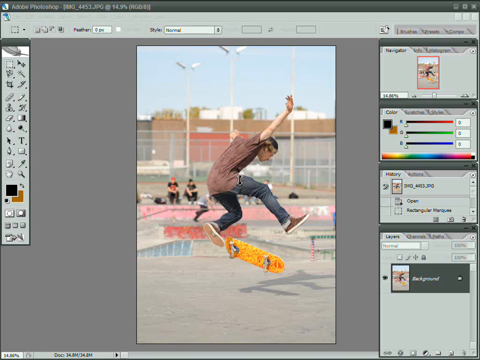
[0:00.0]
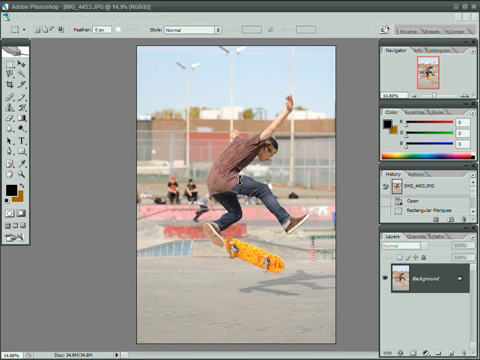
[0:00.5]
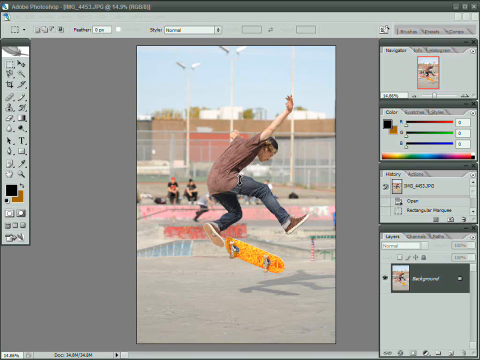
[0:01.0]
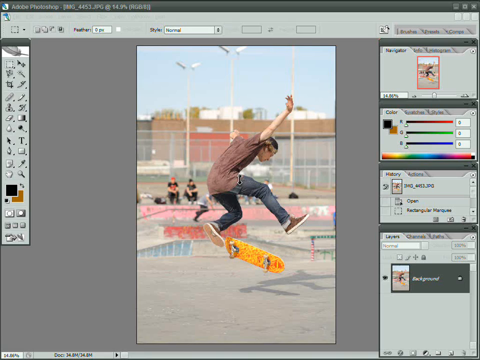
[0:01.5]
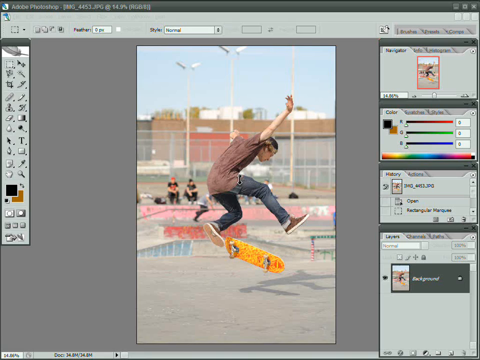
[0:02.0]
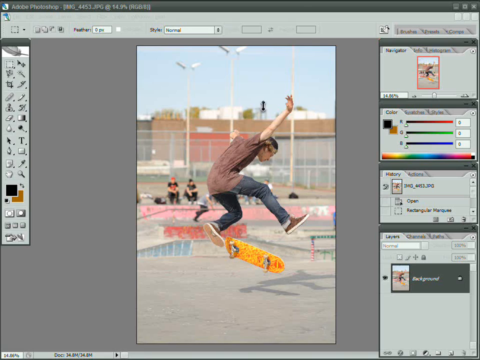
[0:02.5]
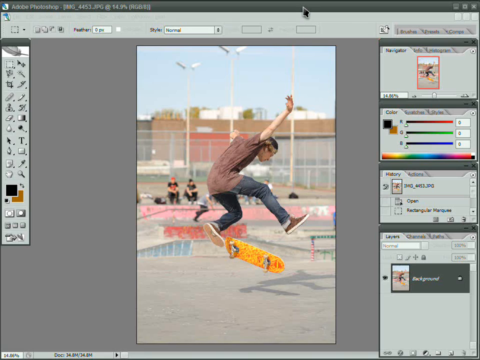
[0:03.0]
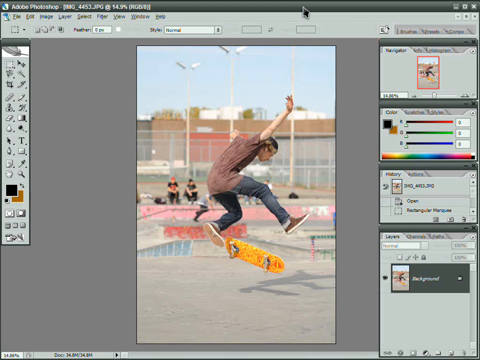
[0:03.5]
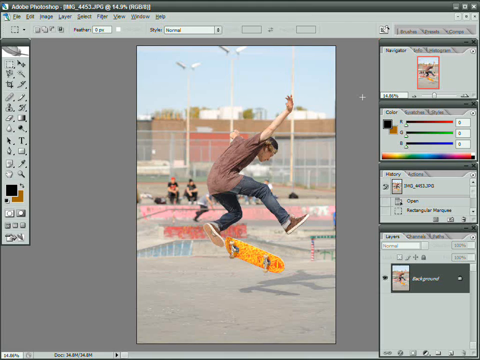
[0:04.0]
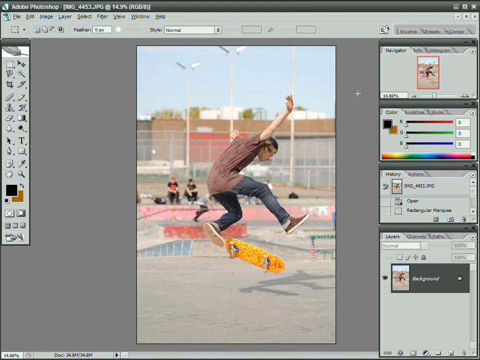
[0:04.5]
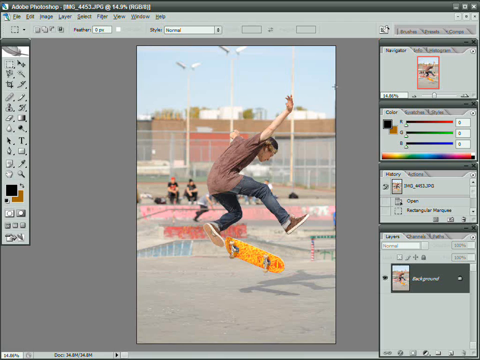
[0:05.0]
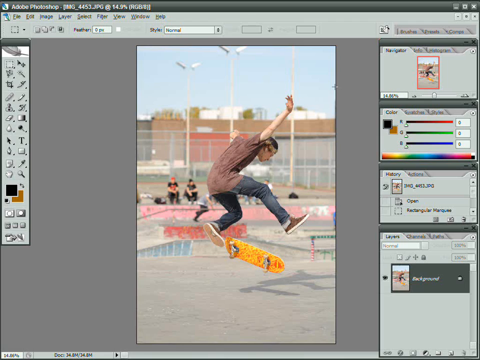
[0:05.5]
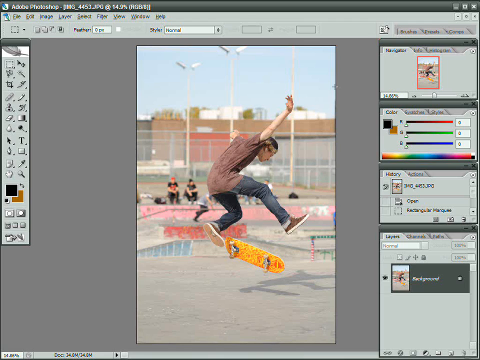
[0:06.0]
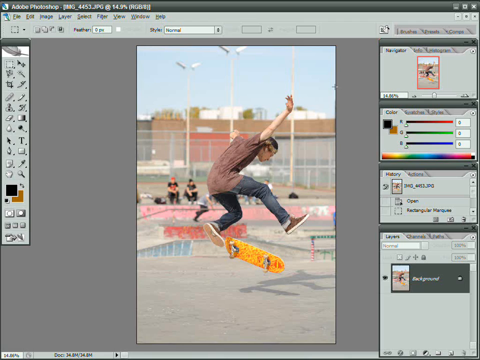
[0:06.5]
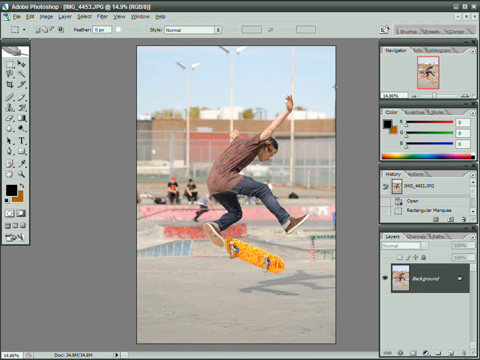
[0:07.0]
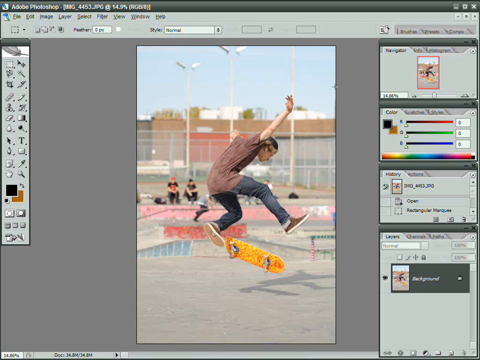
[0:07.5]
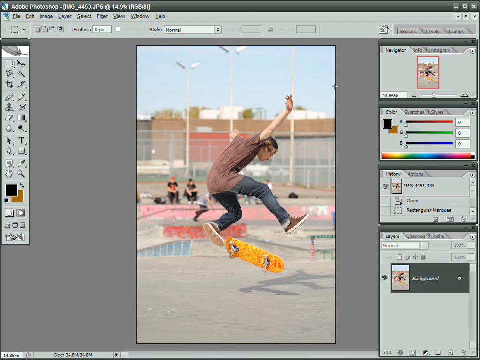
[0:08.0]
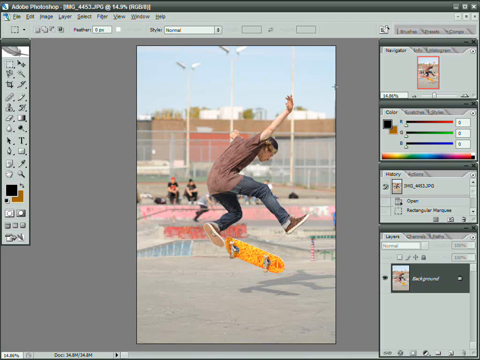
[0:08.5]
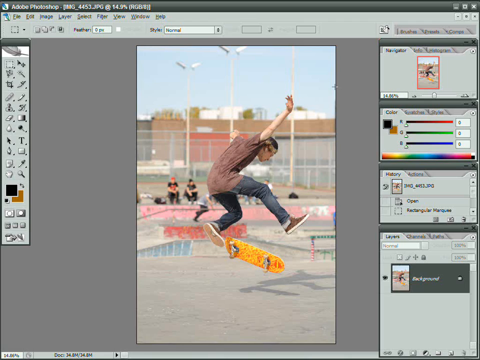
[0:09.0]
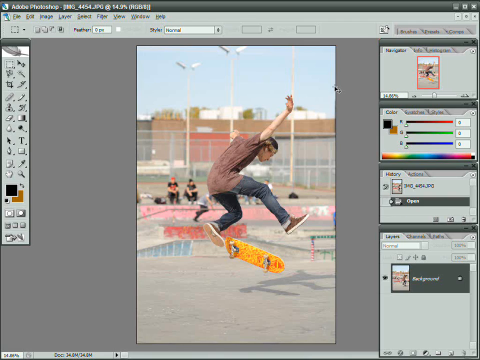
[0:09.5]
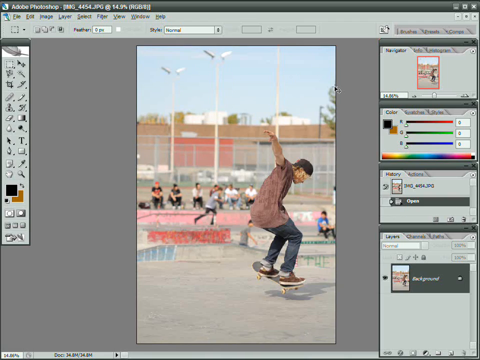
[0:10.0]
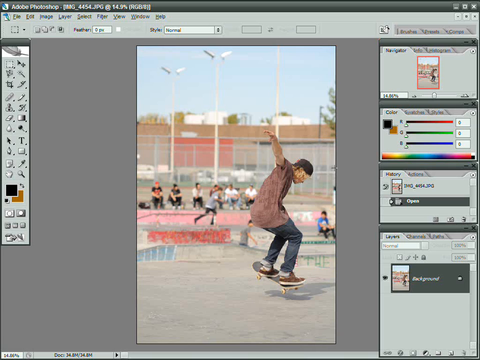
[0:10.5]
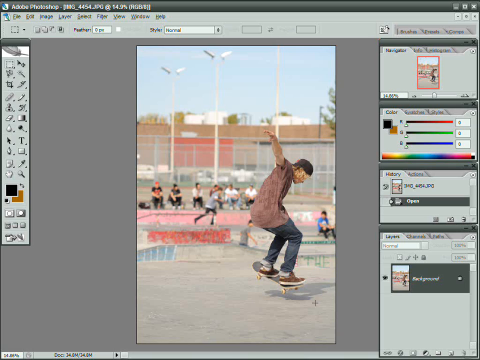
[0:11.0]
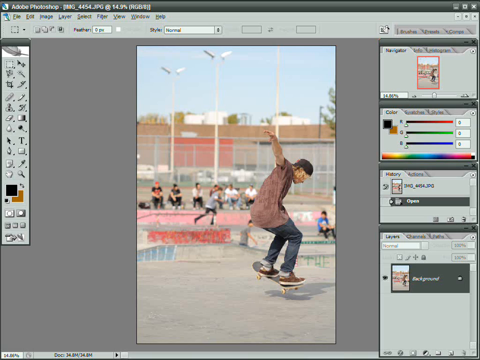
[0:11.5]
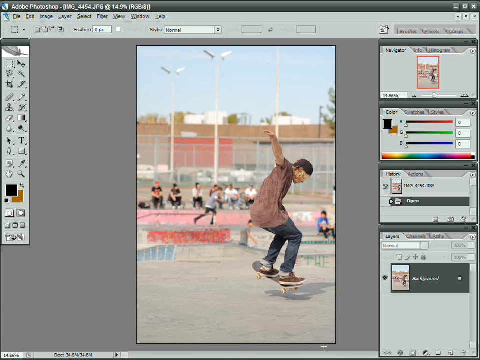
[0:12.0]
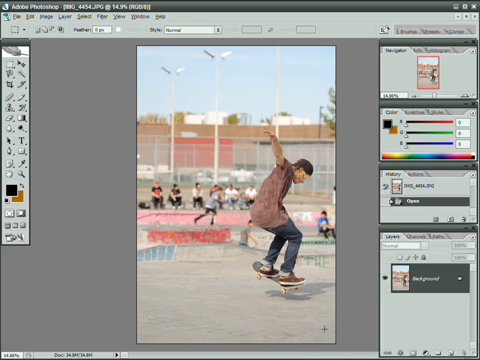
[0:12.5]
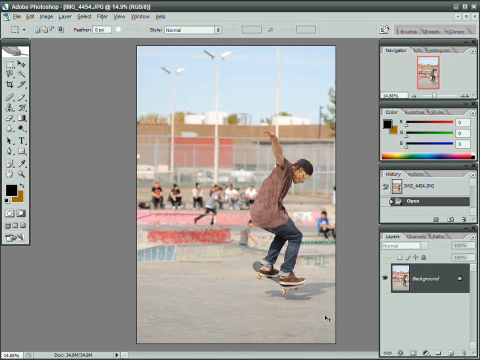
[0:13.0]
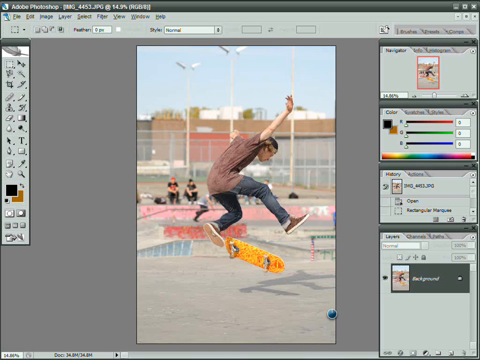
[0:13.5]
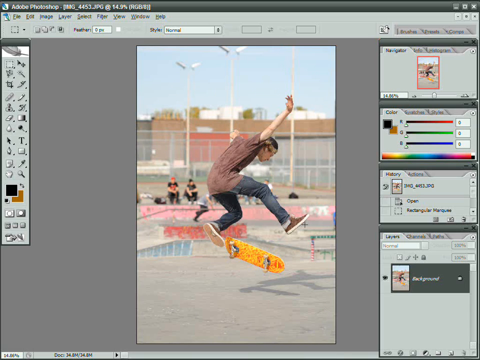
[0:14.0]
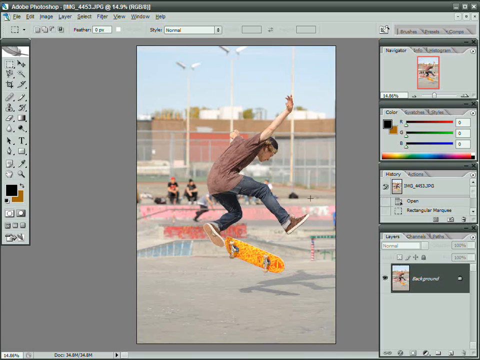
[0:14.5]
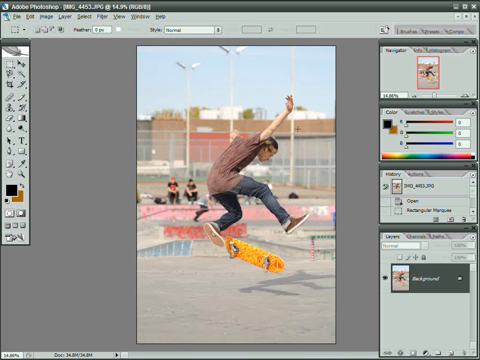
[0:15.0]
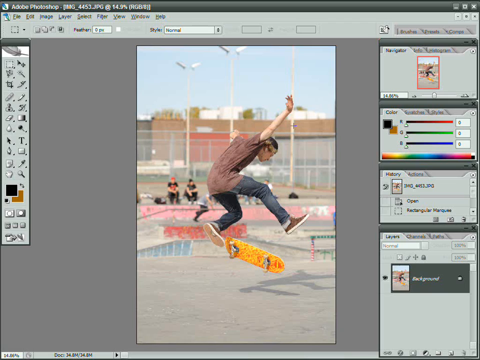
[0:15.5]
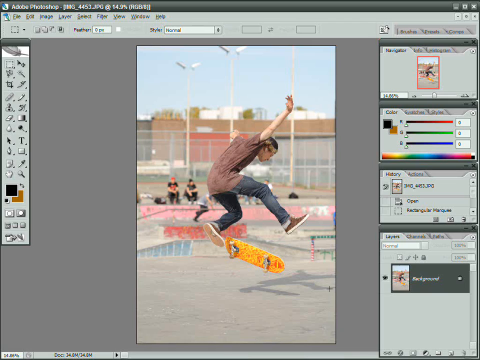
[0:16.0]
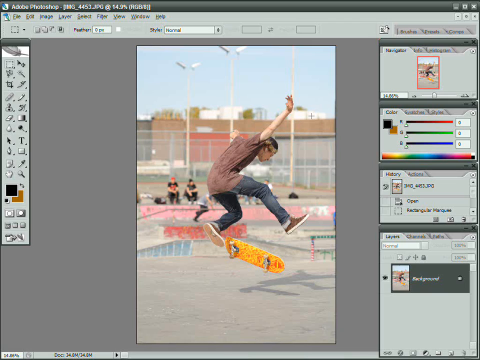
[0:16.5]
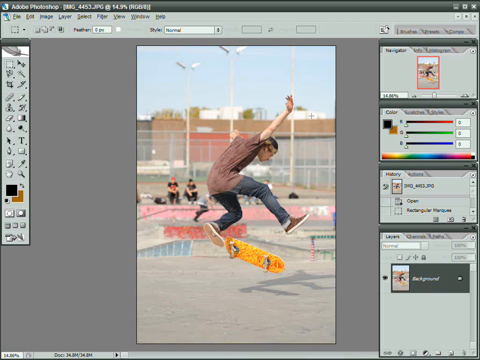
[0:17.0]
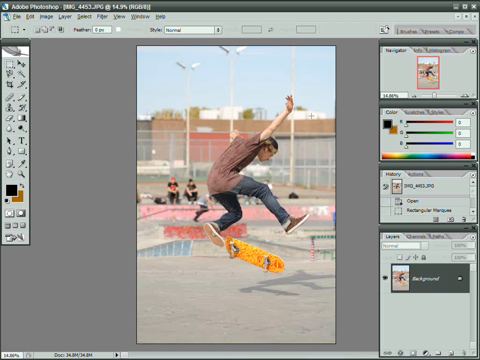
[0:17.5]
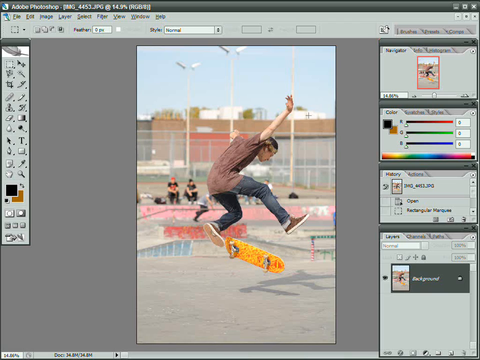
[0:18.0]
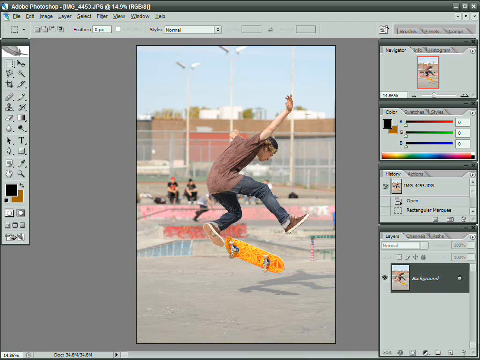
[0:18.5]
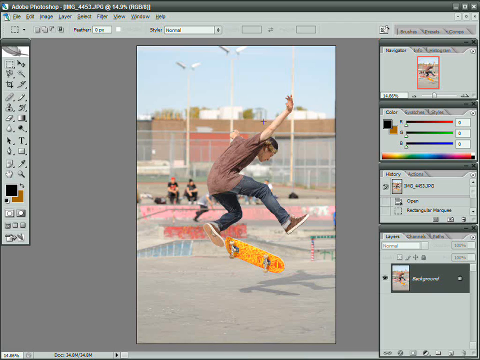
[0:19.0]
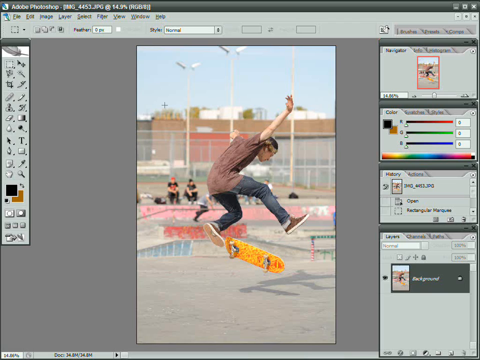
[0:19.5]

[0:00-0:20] An image of someone on a skateboard is being worked on and edited in Photoshop.